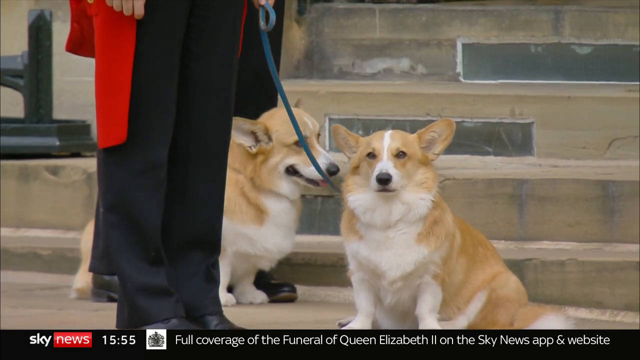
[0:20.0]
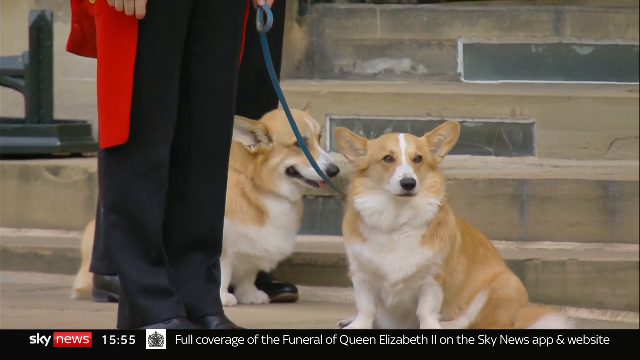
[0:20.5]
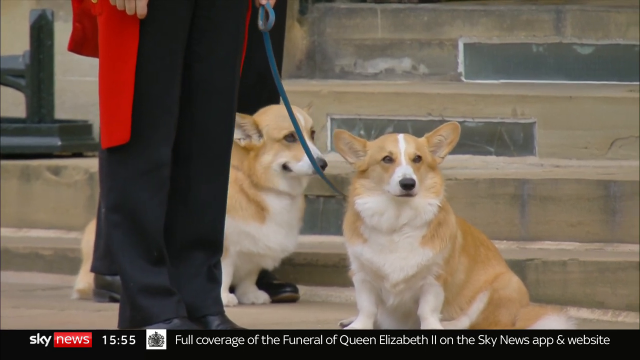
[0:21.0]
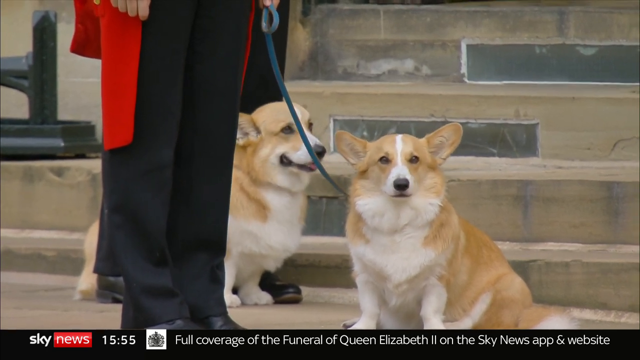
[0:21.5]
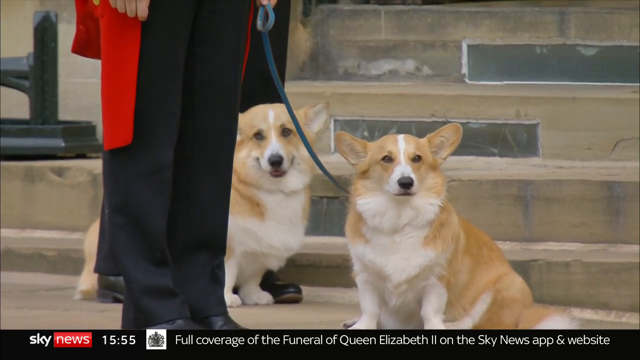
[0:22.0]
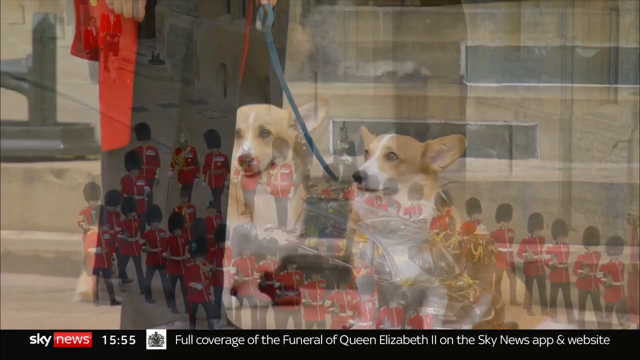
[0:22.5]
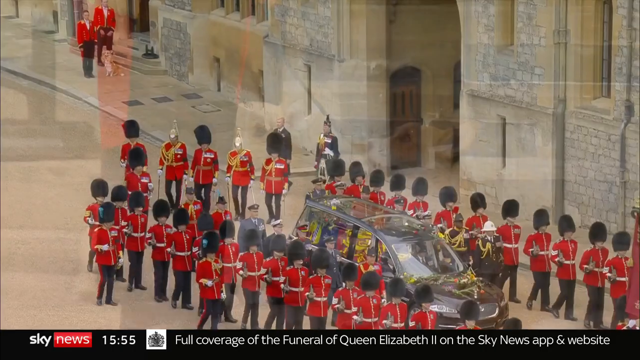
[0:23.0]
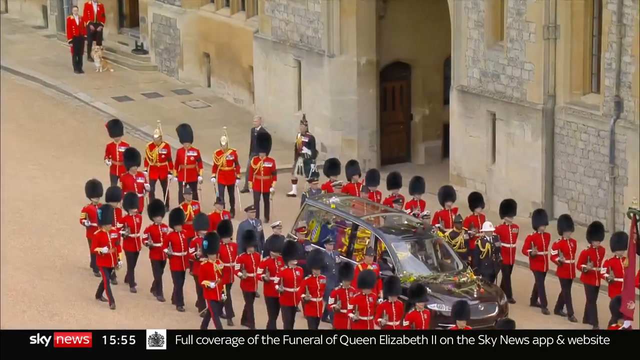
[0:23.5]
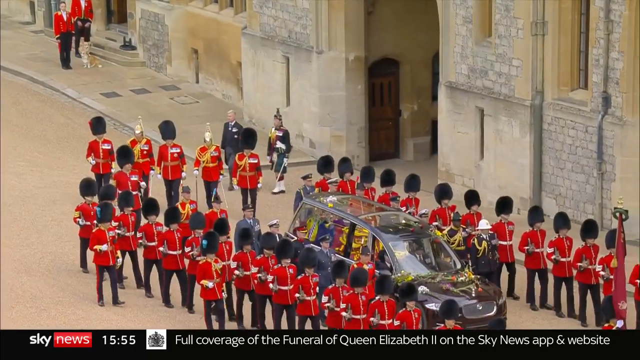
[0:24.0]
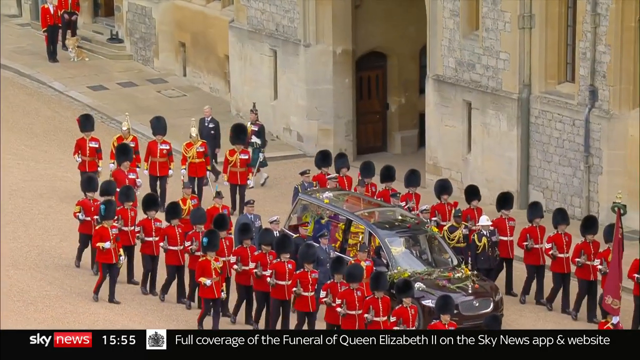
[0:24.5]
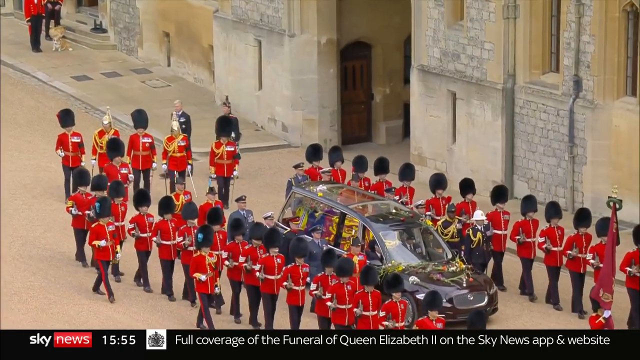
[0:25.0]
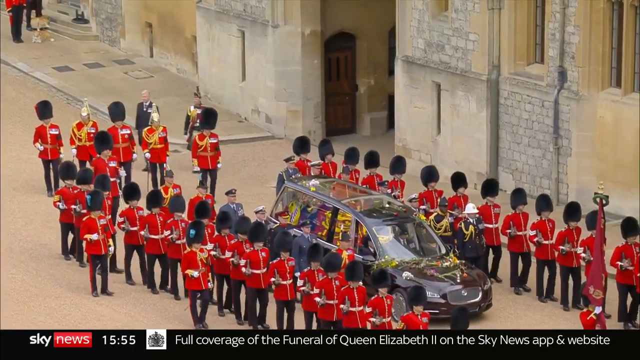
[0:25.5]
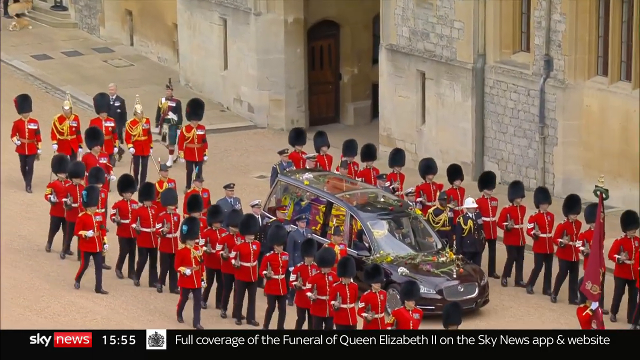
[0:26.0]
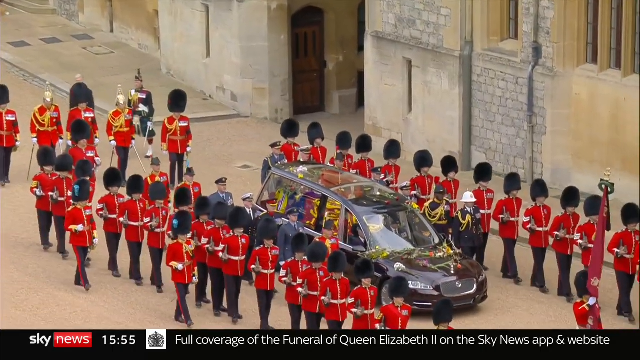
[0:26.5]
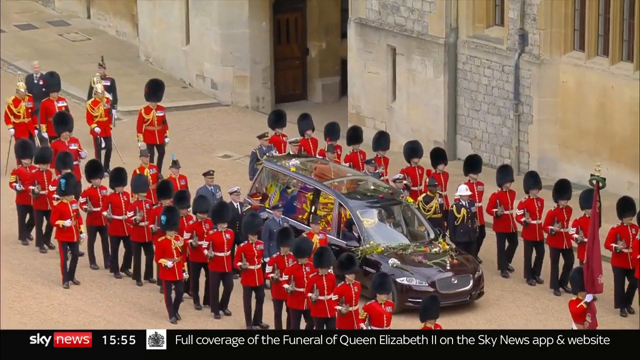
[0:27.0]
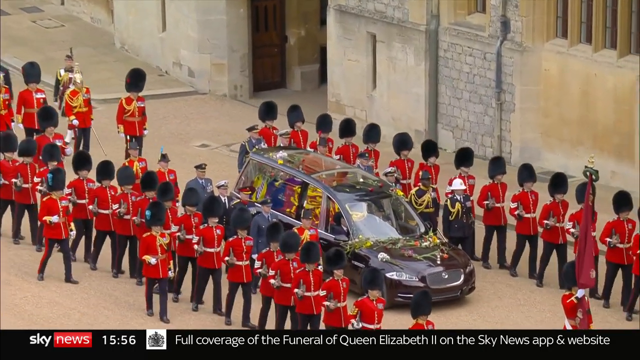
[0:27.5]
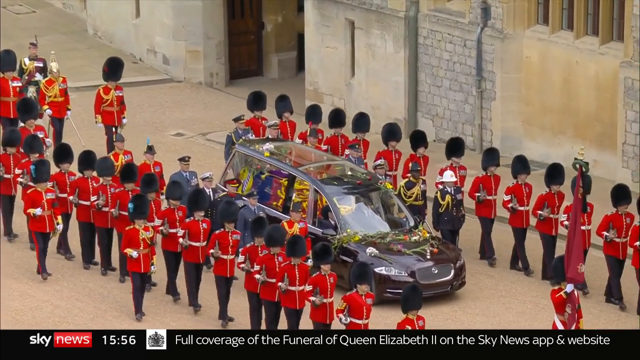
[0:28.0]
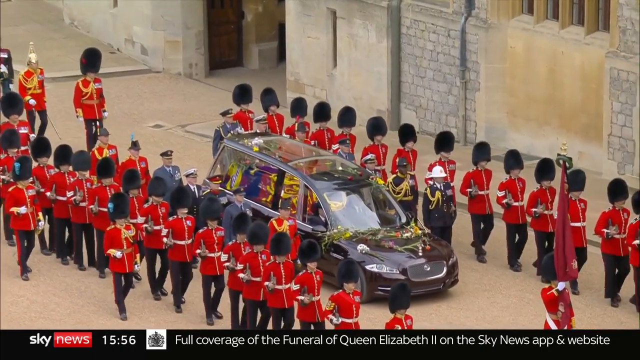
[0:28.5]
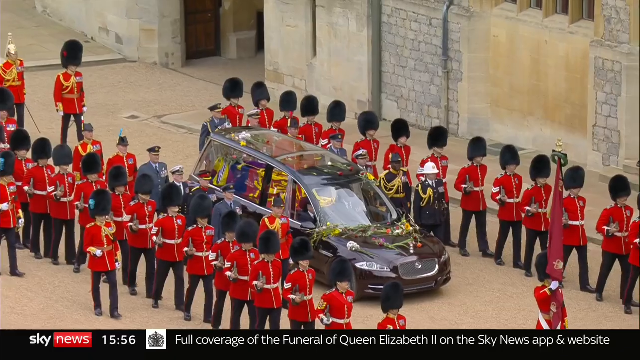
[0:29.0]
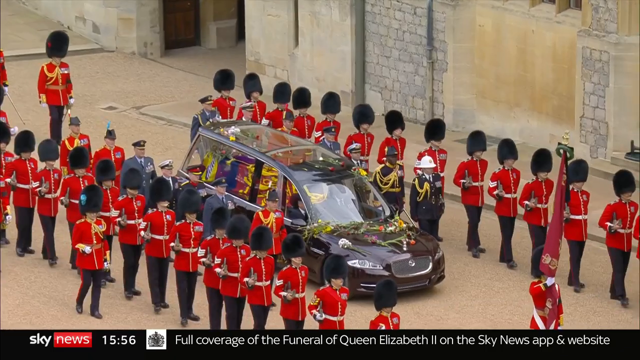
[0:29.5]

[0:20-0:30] The news footage shows Queen Elizabeth II's funeral. What appears to be the hearse carrying her body comes through an arched entranceway, most likely leading into Buckingham Palace. The Queen's guardsmen are to the left and right of the hearse, all wearing the same outfit: a high rounded black cap or hat, a red jacket adorned with gold, and black pants. Through the gate, masses of people can be seen lining the right and left of the road the hearse has just traveled down. The day appears bright and sunny. The corgis are shown. Another view shows the procession, with soldiers or guards marching on the right and left of the hearse, heading eastward. Text at the bottom reads "full coverage of the funeral of Queen Elizabeth II on the Sky News app and website." The time shown is 1556.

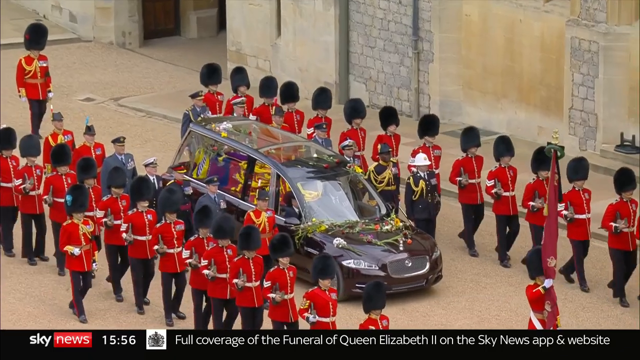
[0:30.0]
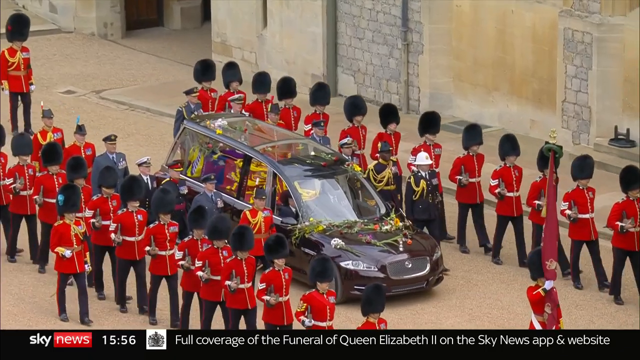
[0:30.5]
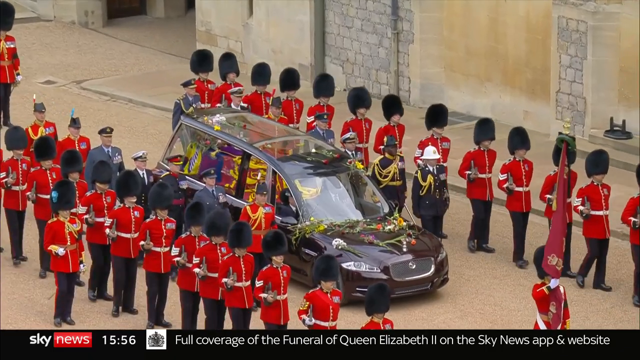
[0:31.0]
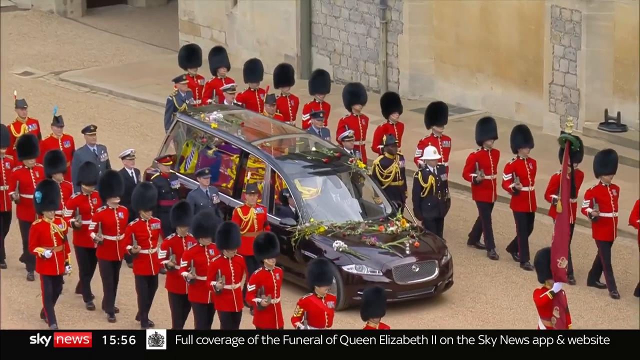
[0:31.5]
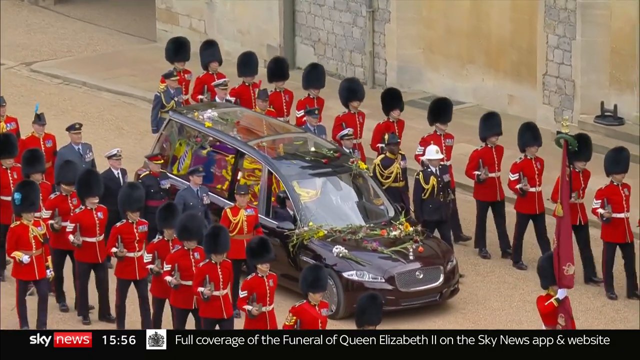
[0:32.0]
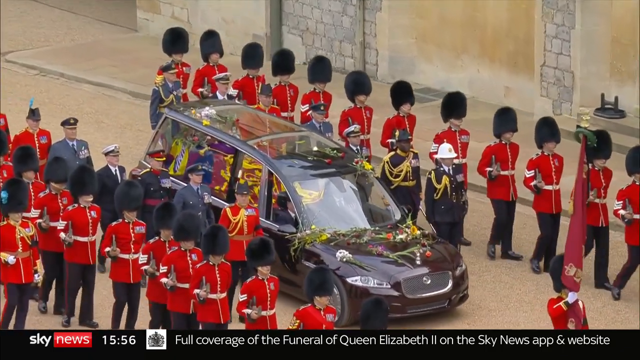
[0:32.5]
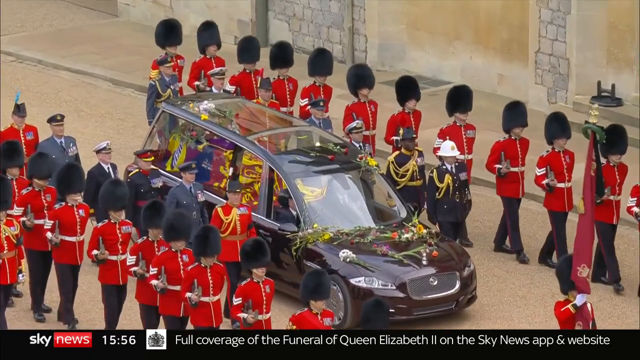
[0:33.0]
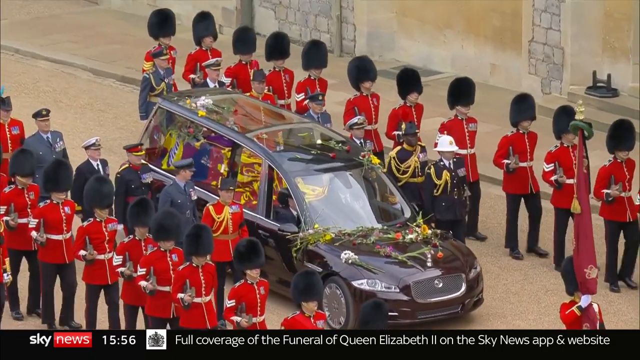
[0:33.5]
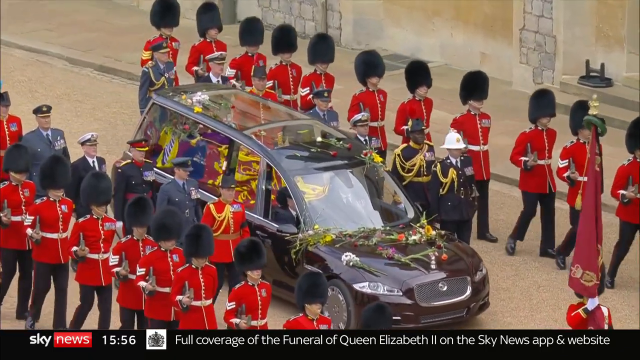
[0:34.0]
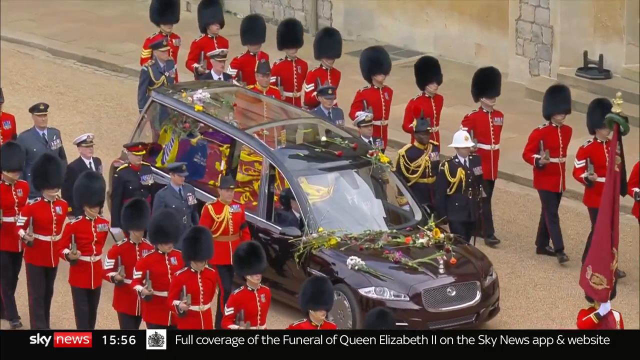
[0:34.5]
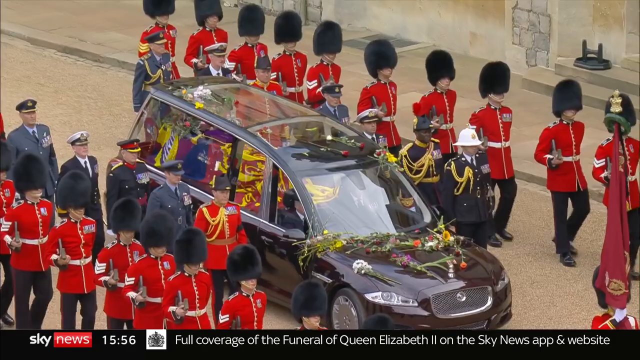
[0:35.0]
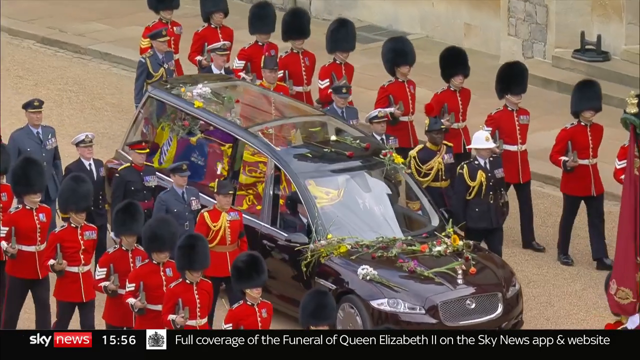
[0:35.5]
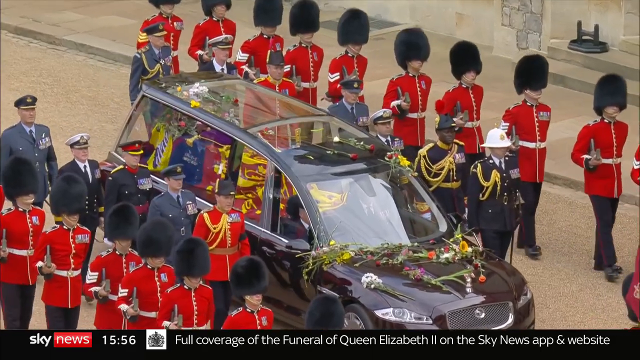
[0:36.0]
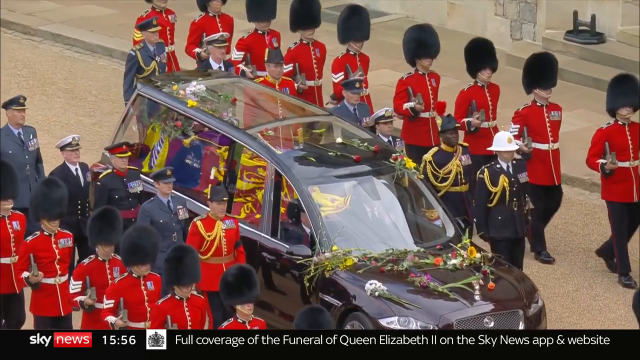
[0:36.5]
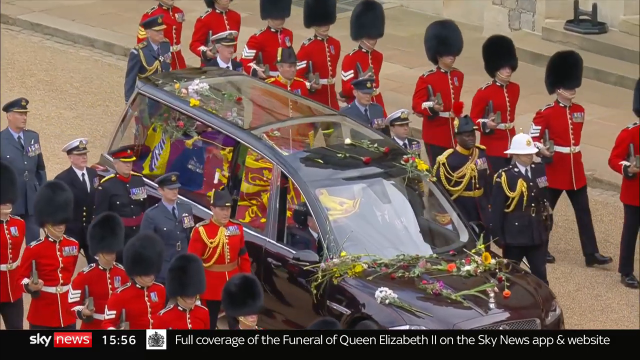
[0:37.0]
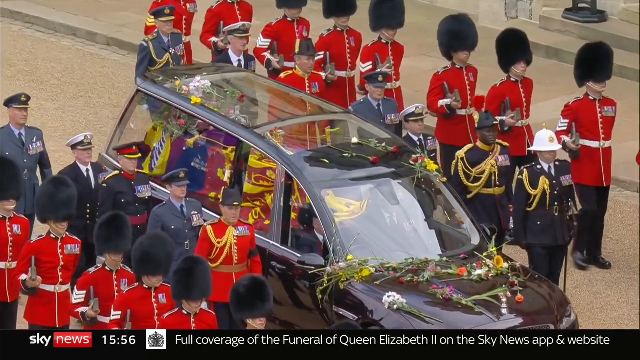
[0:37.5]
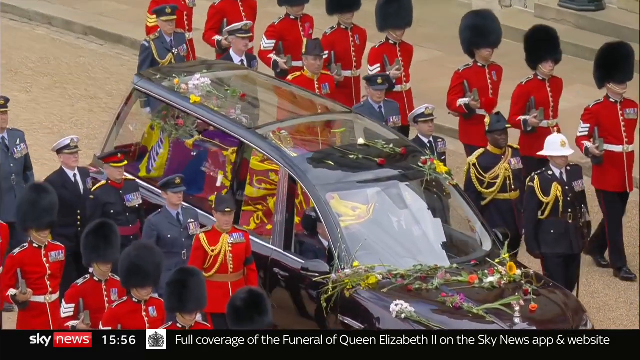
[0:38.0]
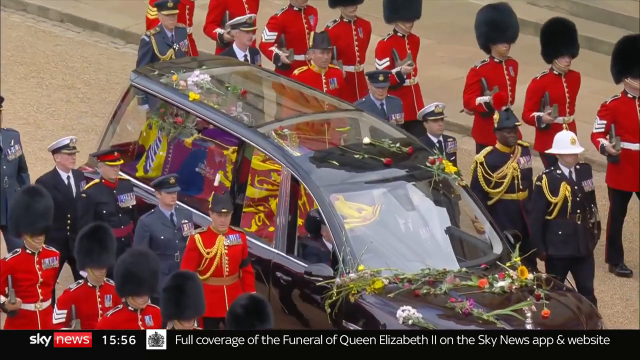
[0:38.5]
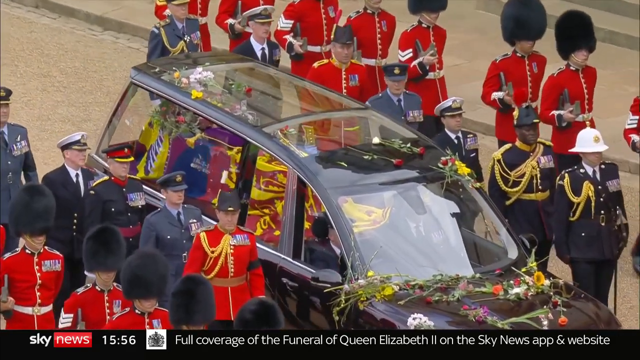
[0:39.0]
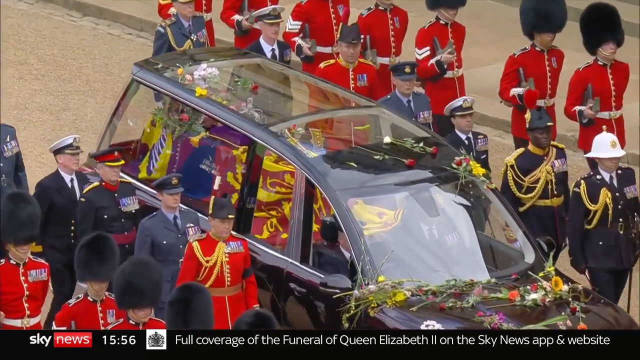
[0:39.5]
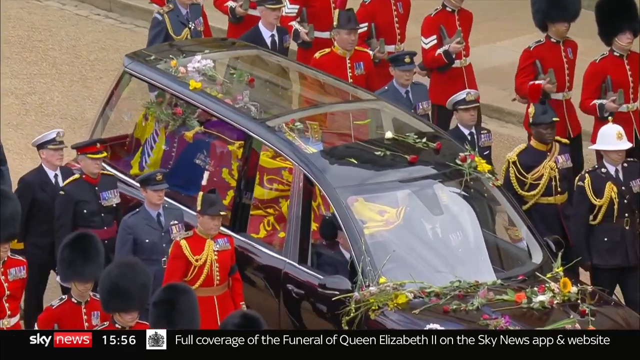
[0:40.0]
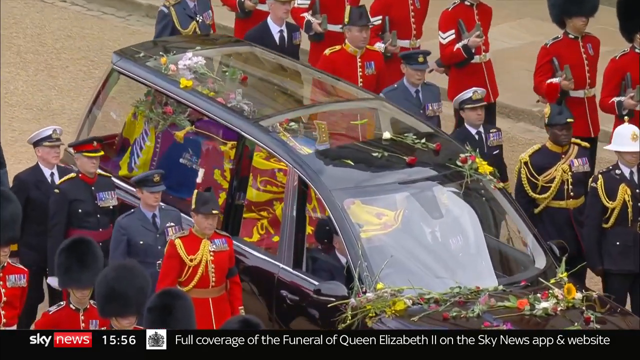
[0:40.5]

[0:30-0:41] The news footage shows the funeral procession of Queen Elizabeth II. The hearse is surrounded by a line of guards on both the right and left sides; it is apparently traveling slowly, as people keep up walking alongside. Military men with caps are closer to the vehicle, and the guards stand outside of them. They are heading eastward. The dark vehicle has flowers placed on the hood, and the procession is apparently walking through into the palace. Text at the bottom of the screen reads "full coverage of the funeral of Queen Elizabeth II on the Sky News app." The Sky News logo is in the lower left corner.